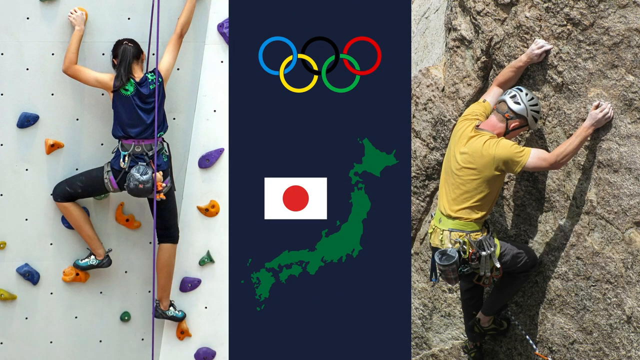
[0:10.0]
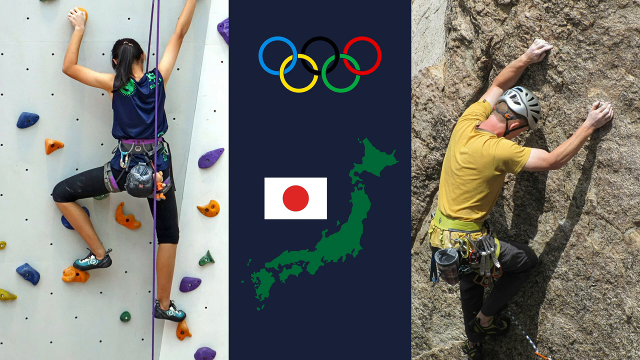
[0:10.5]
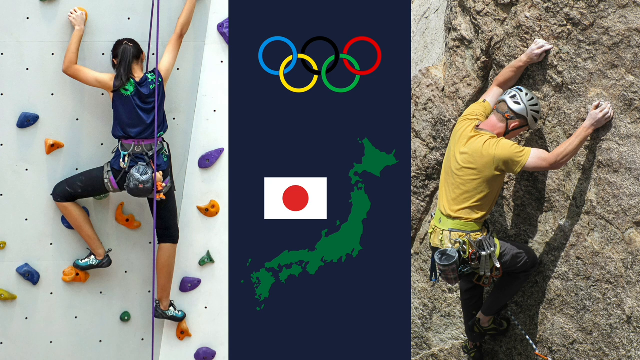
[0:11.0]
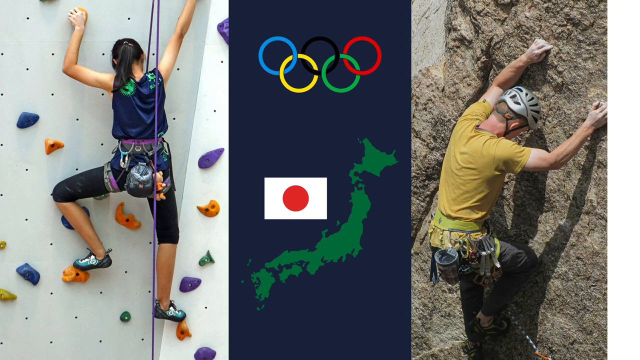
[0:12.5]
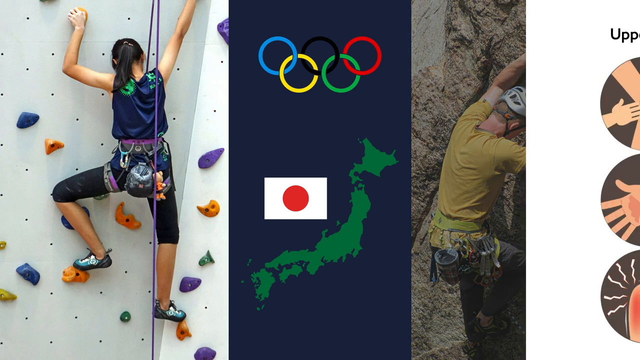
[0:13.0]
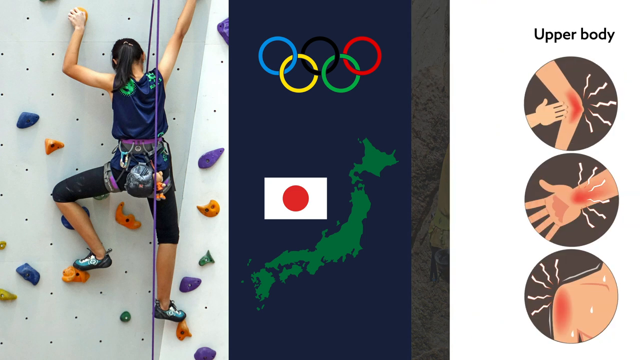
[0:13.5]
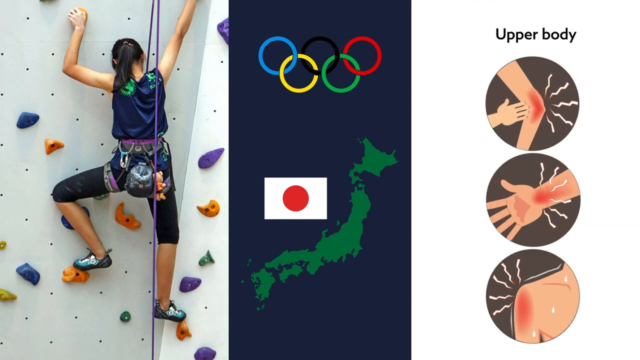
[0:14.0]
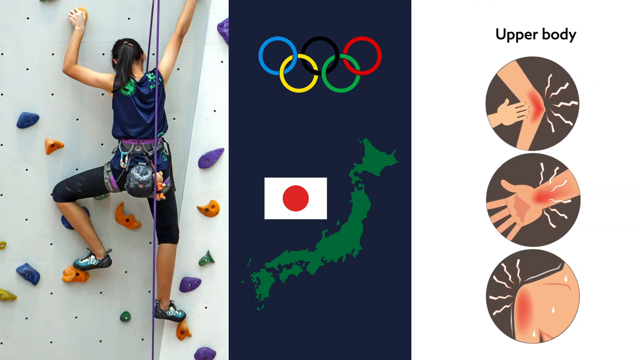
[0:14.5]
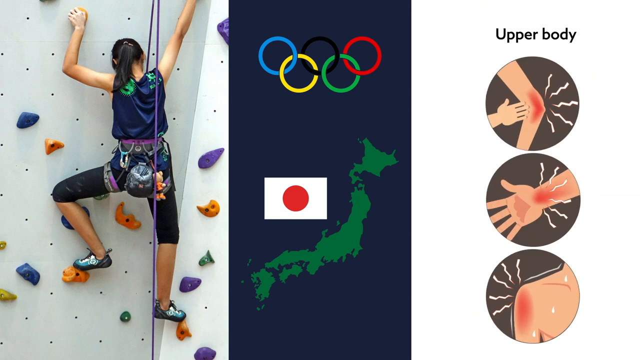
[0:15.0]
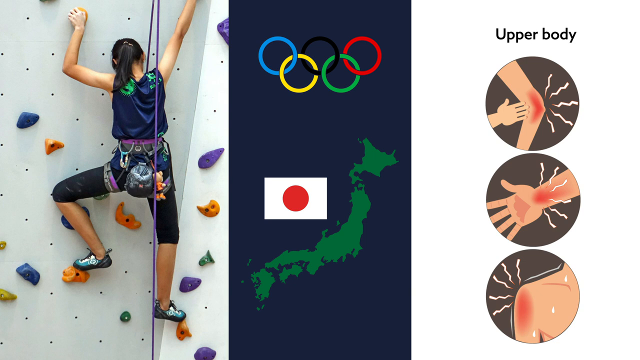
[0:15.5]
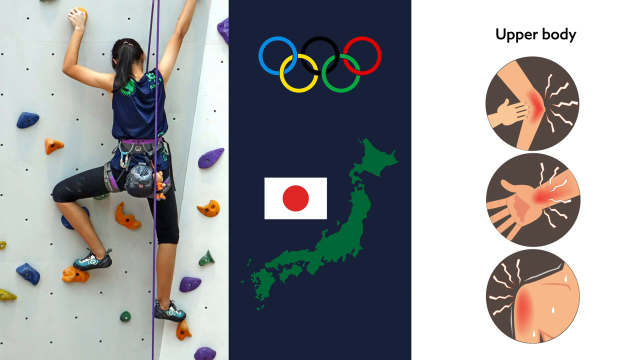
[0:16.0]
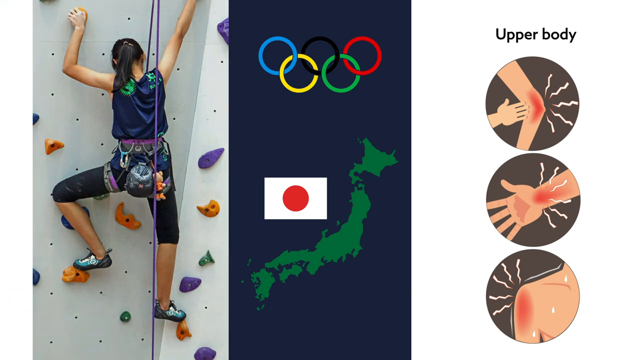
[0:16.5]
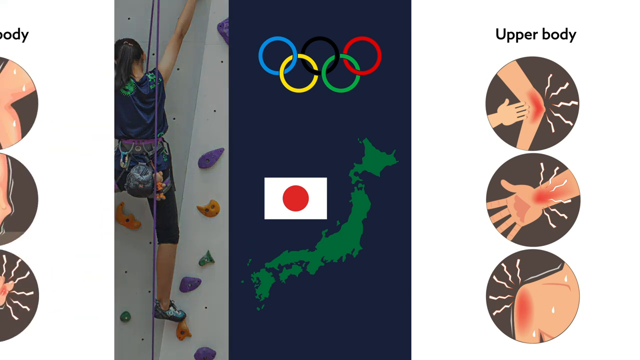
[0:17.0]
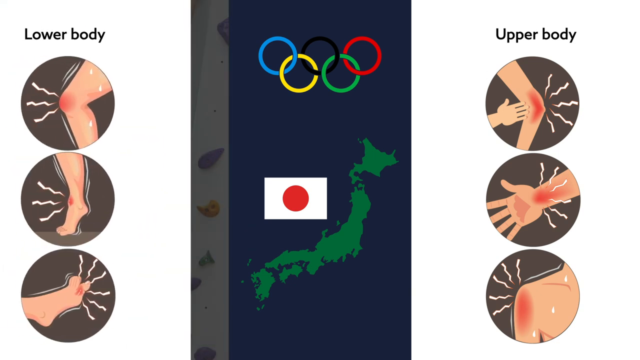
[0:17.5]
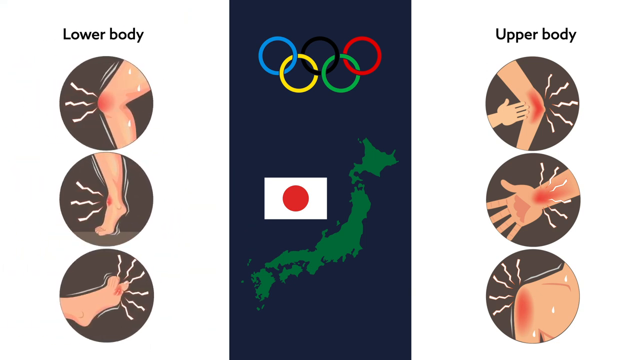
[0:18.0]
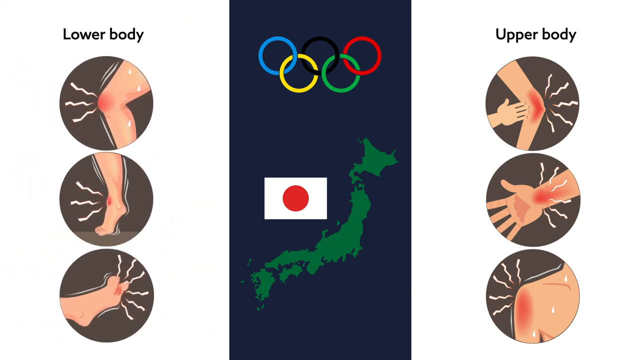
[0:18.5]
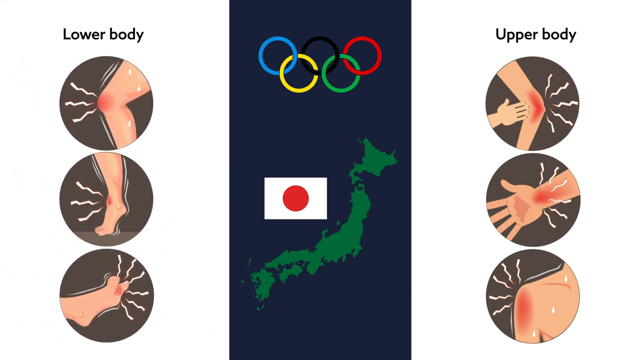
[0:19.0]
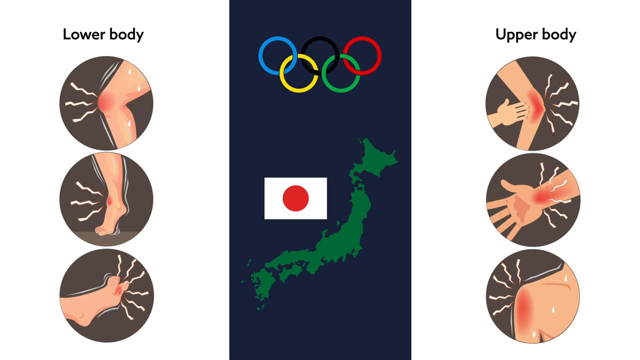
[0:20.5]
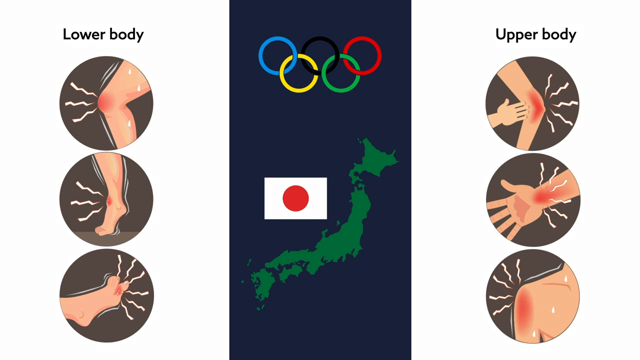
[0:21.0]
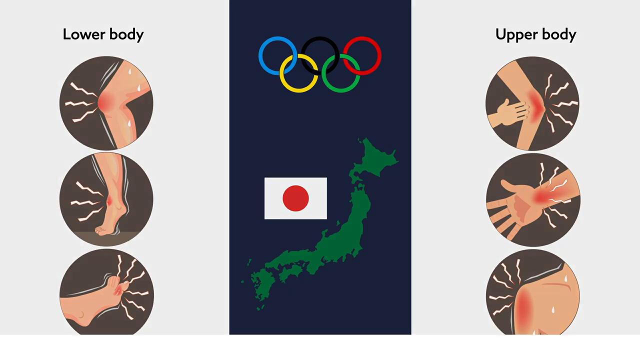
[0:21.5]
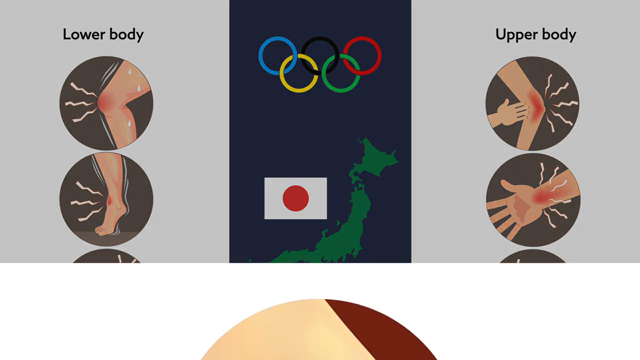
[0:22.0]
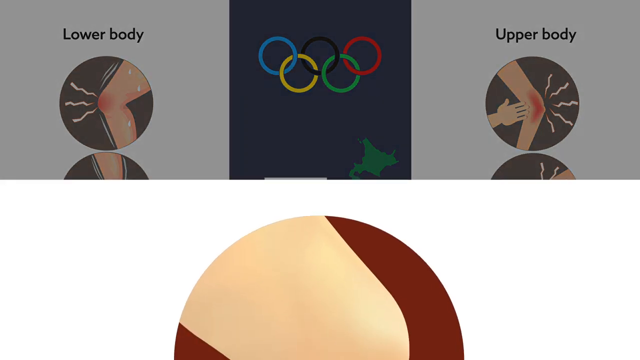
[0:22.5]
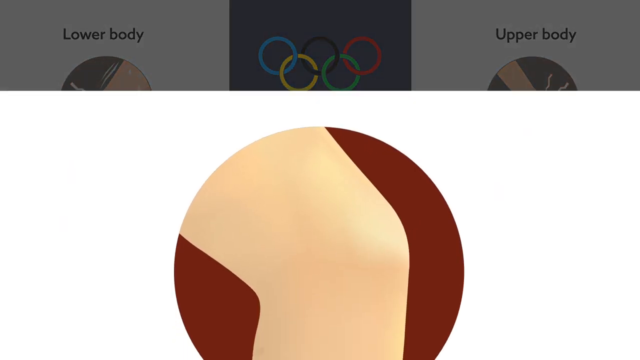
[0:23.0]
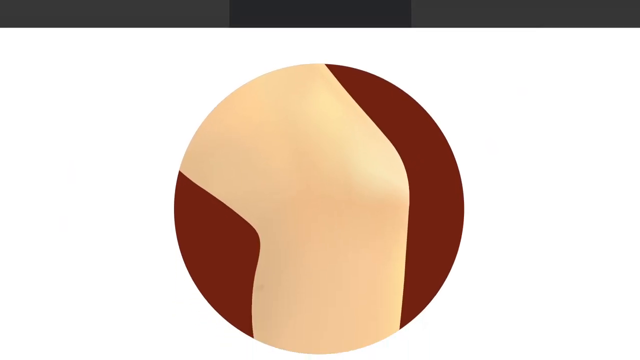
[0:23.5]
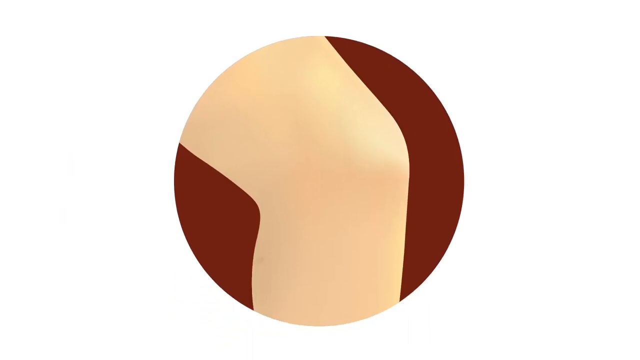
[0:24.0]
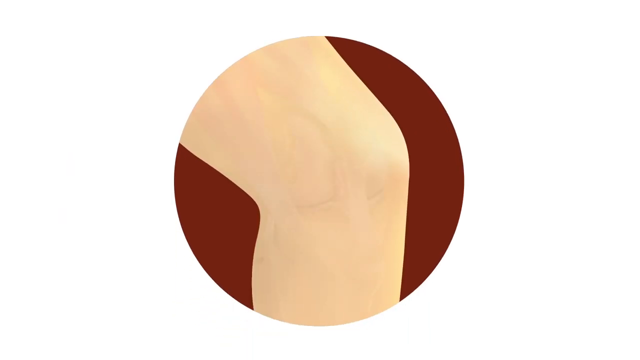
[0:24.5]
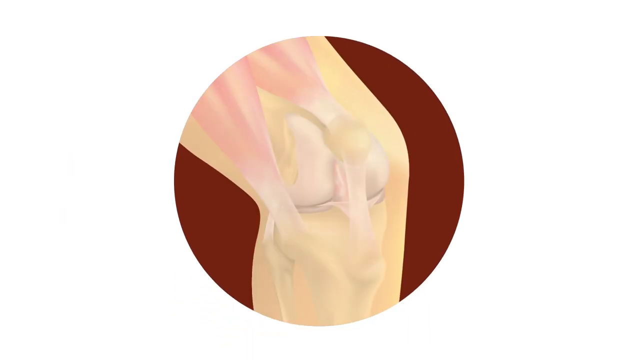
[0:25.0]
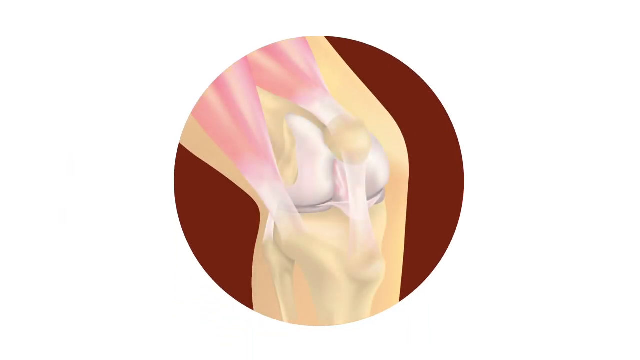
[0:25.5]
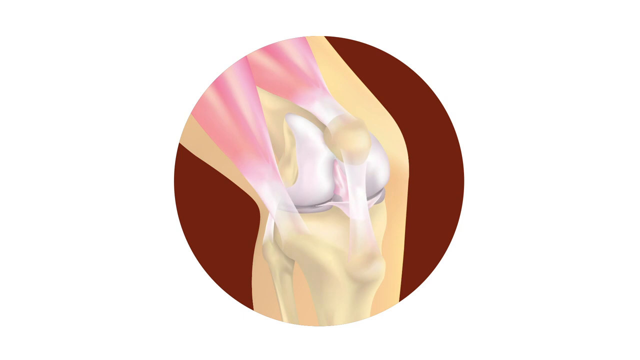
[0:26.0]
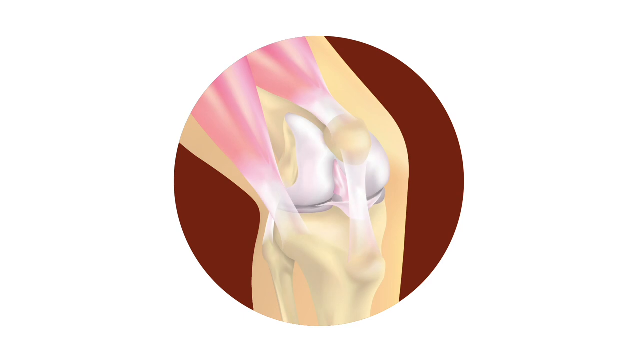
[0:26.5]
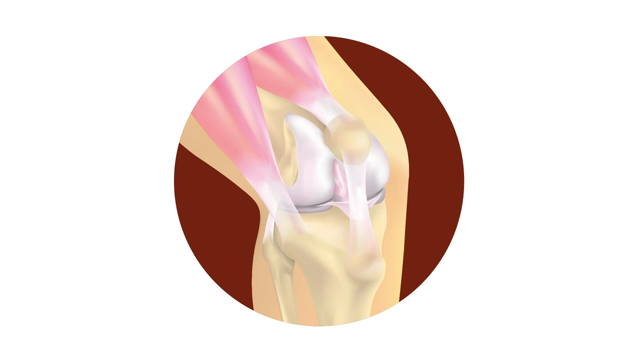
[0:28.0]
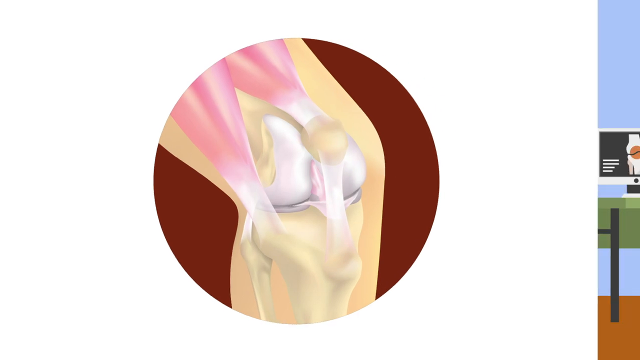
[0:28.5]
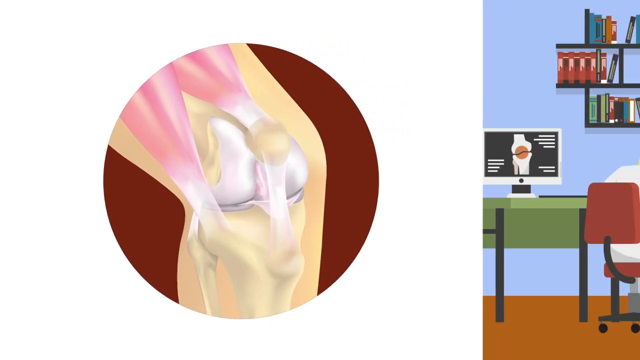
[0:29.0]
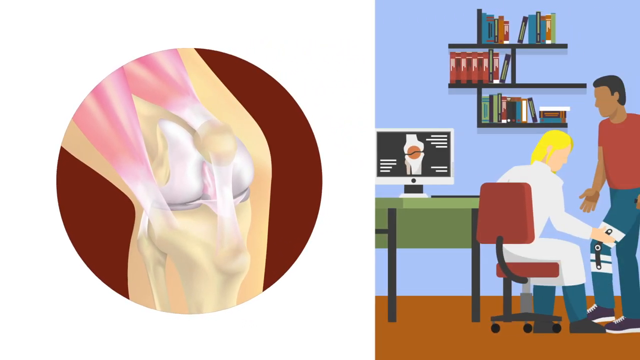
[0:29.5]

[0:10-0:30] Two people are climbing in images on the left and right: on the left, a female climbs a sports center climbing wall; on the right, a man climbs a cliff. A blue bar runs down the center of the screen. Within the bar is the island of Japan, with Japan's flag above it, and above that are five interconnecting rings, from left to right blue, yellow, black, green and red, which sort of look like the Olympic rings. A white banner moves in from the right side of the screen. On it is an illustration of a person's left elbow with their right fingertips touching it; below that, an illustration of the inside of a person's wrist that is red with lines coming off it; and below that, an illustration of a person's right shoulder that is red with lines coming off it. Above these illustrations, "upper body" is written in black letters. The same kind of white banner comes in from the left, with "lower body" at the top, and illustrations of a person's right knee, right ankle and left foot, each with lines coming off it. Then a white screen comes up from the bottom and covers the screen, with a red circle in the center containing an illustration of a person's knee showing the bones, muscles and tendons. A screen then comes in from the left, showing what looks like two people in a doctor's office.